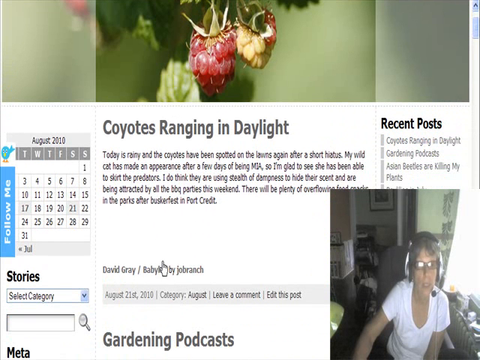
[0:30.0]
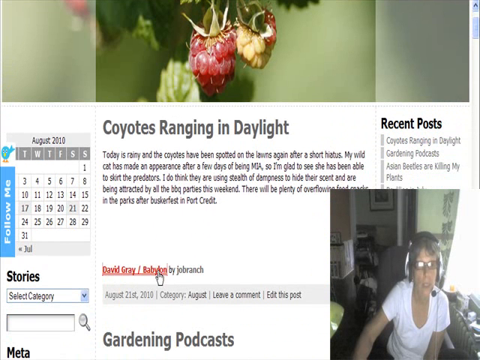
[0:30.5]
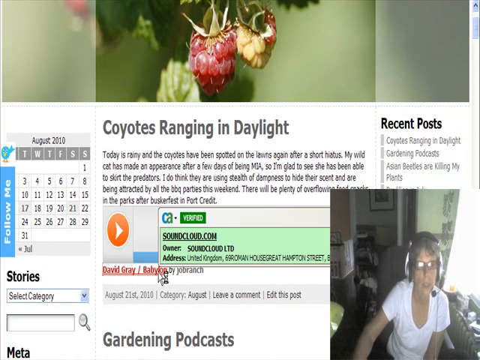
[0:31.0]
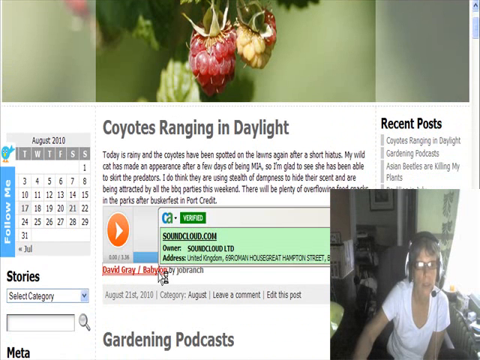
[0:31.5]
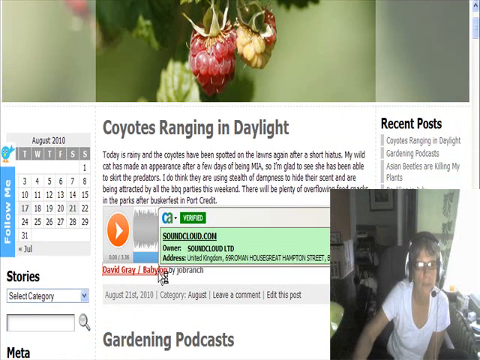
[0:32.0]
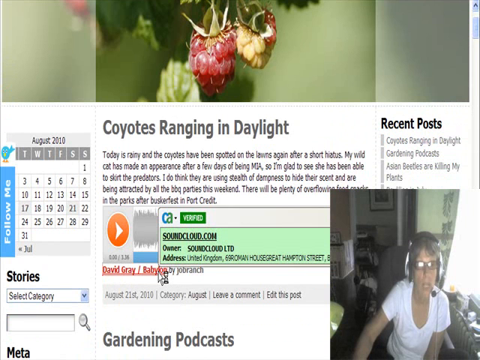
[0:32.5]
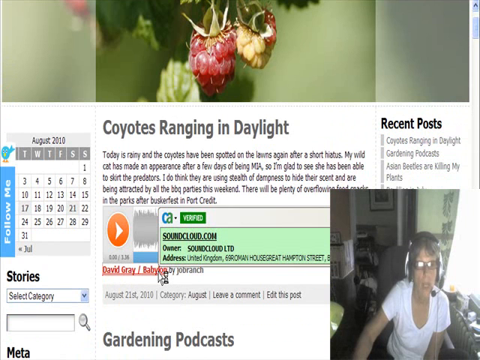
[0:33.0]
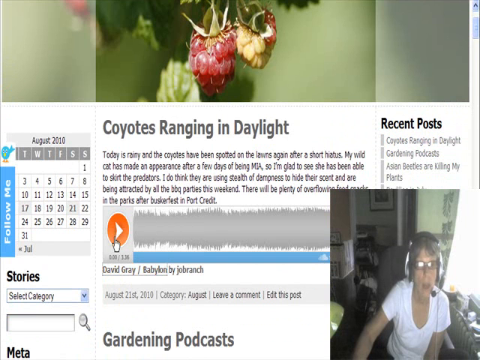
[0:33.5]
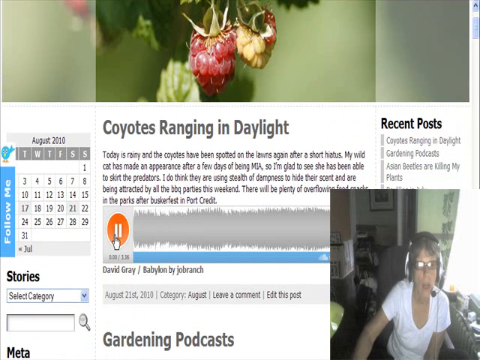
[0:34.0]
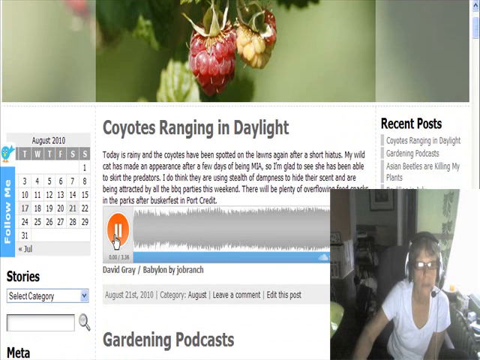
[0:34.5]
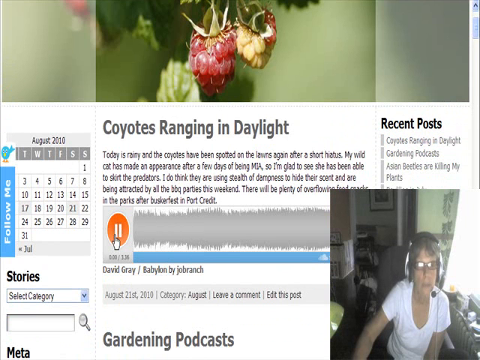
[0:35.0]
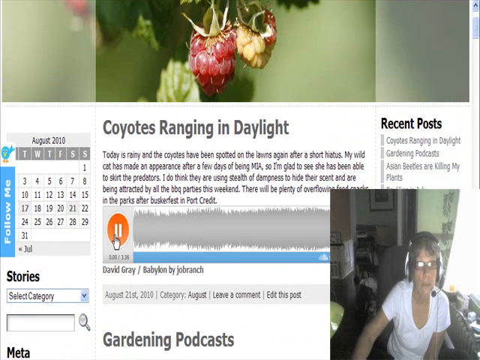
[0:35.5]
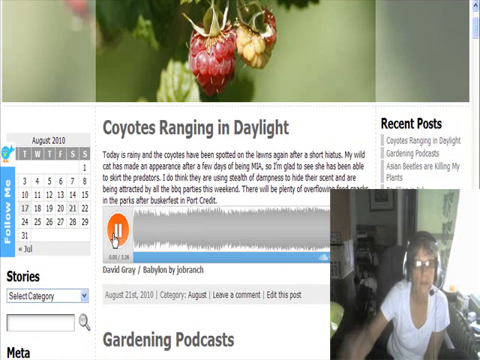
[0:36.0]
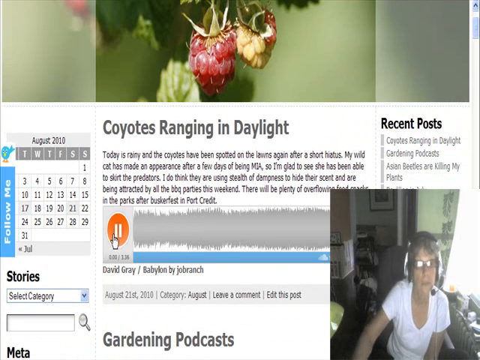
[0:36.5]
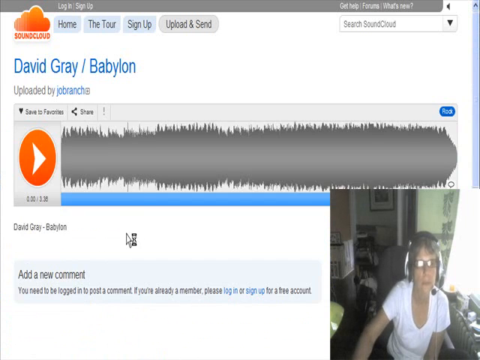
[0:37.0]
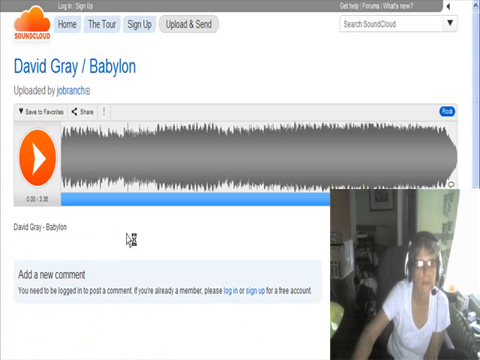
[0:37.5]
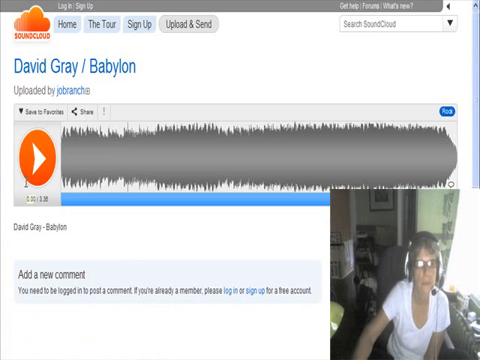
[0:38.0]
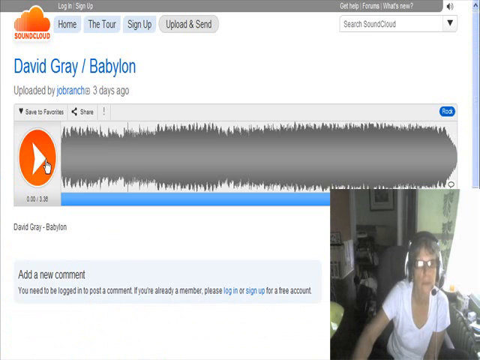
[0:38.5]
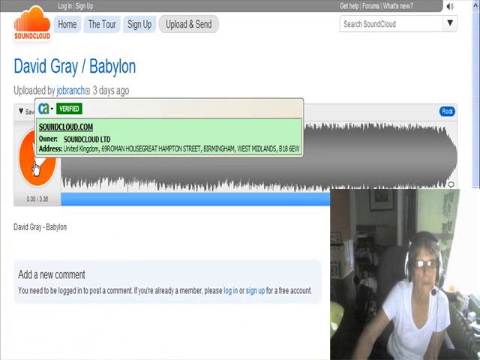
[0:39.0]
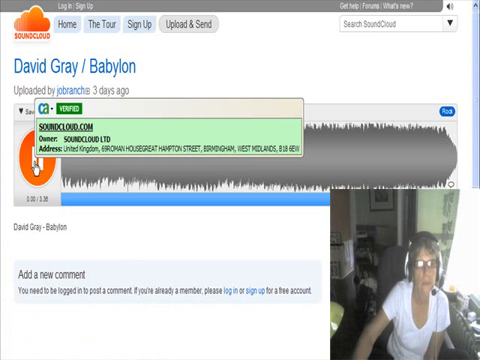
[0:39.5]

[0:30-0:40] A small pop-up window in the bottom right-hand corner overlays the screen, showing the woman speaking. Across the top is the image of the raspberries on a somewhat transparent greenish background, and below it on the screen is "coyotes ranging in daylight" with a description underneath. Along the left-hand side, next to that title, is a calendar showing August, apparently 2018 or 2019. Below that is "stories," with a drop-down menu beneath it that says "Select a category." On the right-hand side of the screen is an option that says "recent posts," followed by several lines that seem to be clickable posts. The woman talks and hovers her mouse over something under "coyotes ranging in daylight," and a green opaque box with black lettering opens. She clicks, a sound bar opens up, apparently with sound, and she clicks on that.